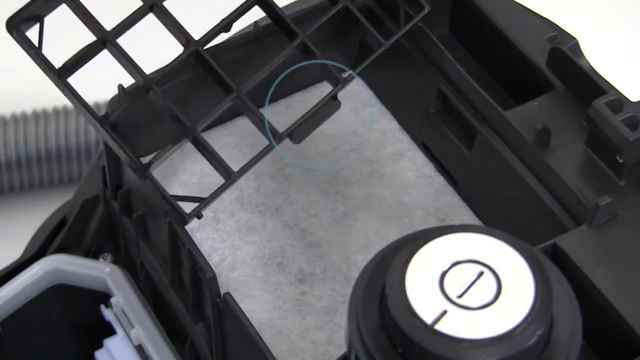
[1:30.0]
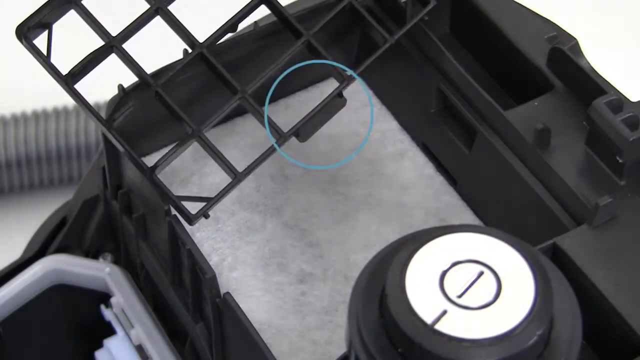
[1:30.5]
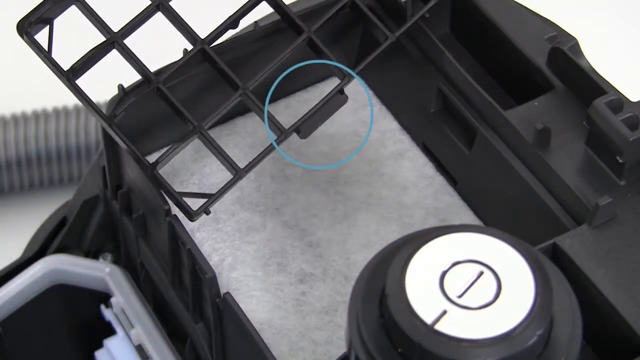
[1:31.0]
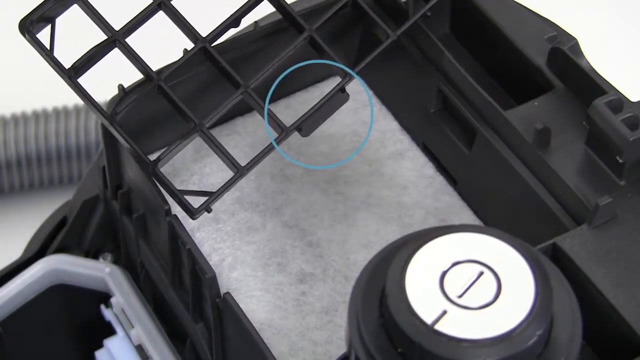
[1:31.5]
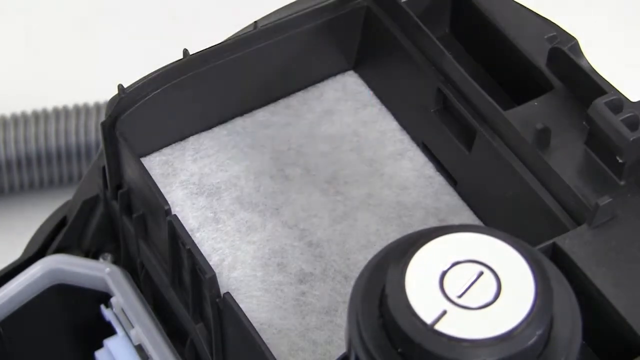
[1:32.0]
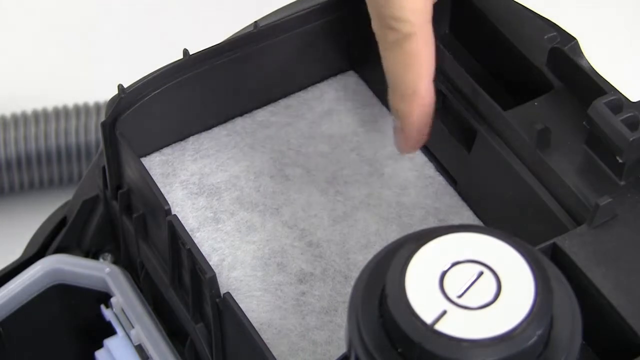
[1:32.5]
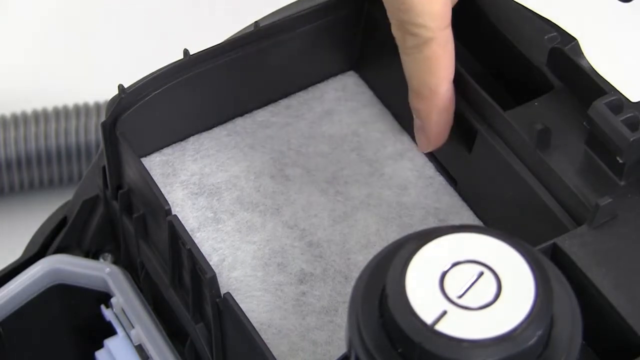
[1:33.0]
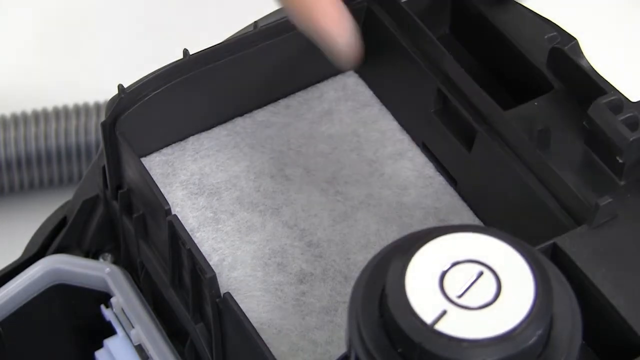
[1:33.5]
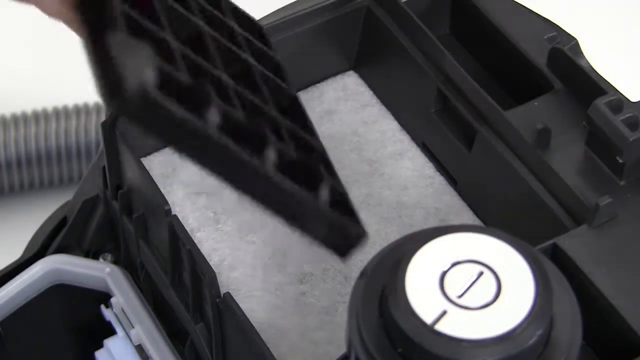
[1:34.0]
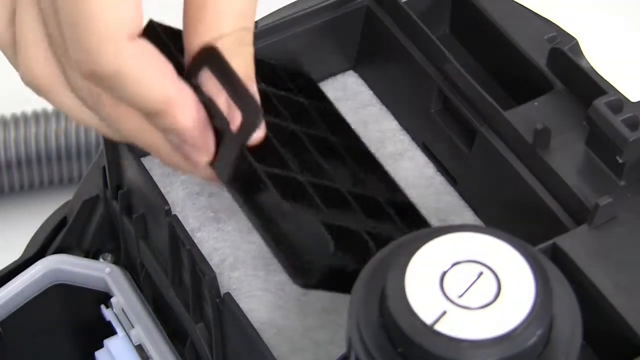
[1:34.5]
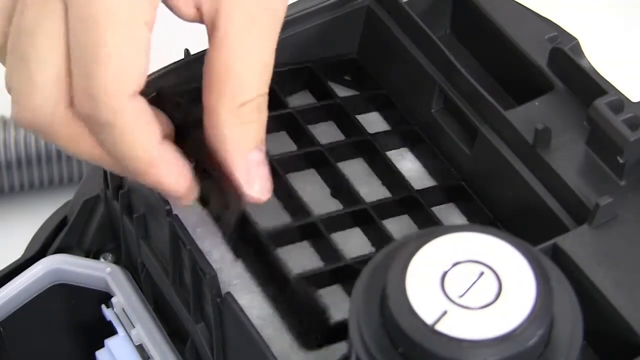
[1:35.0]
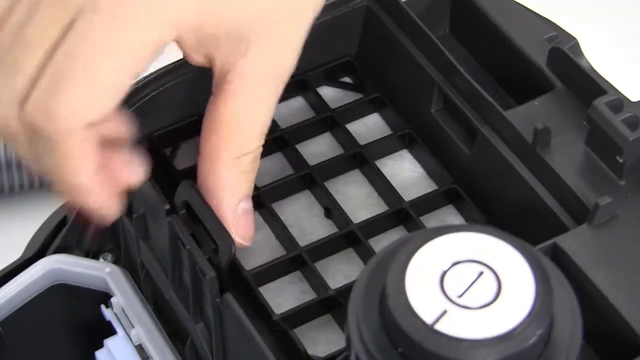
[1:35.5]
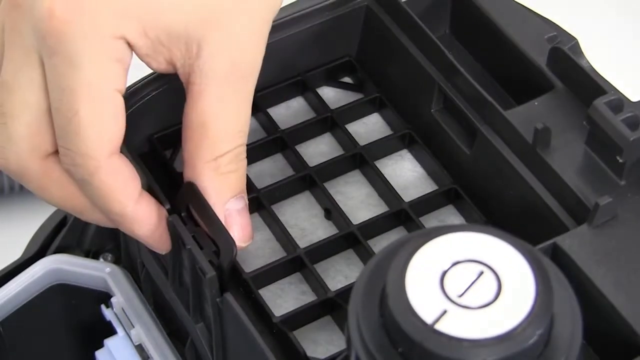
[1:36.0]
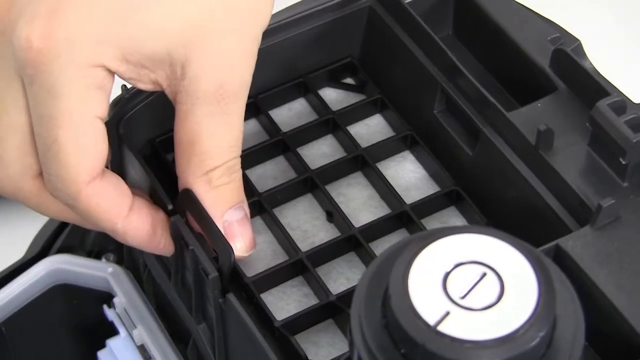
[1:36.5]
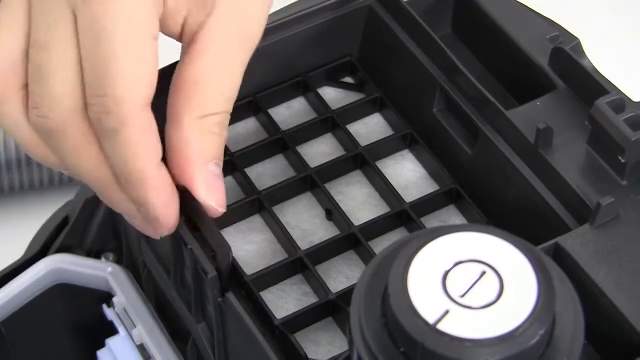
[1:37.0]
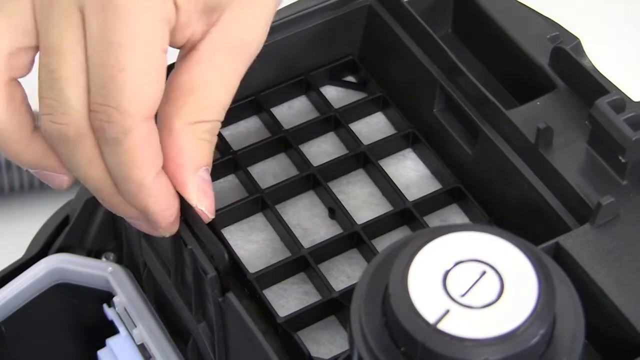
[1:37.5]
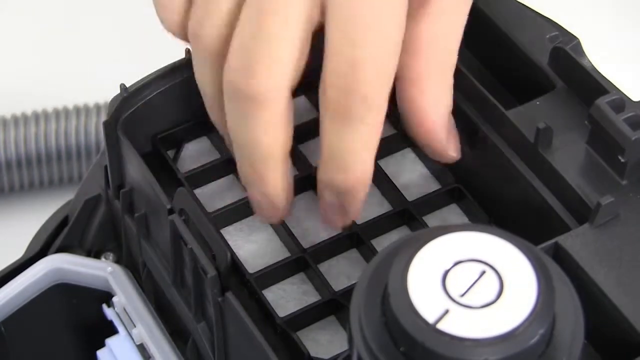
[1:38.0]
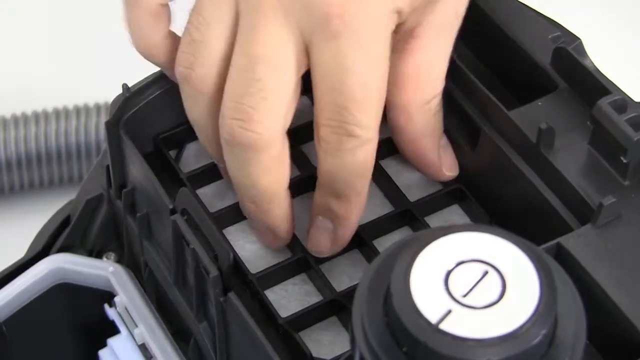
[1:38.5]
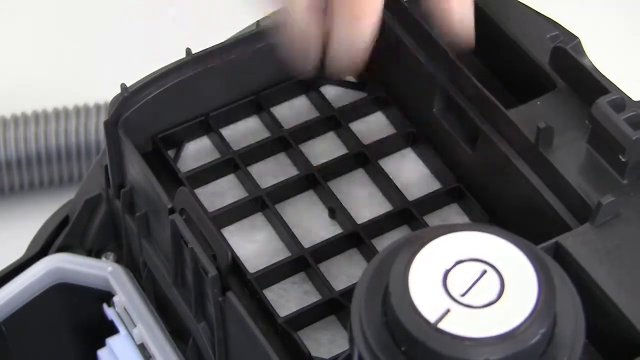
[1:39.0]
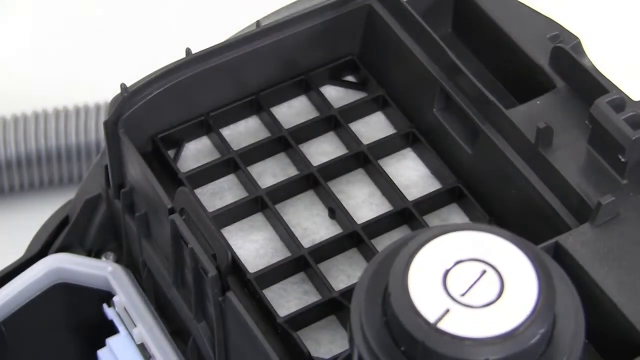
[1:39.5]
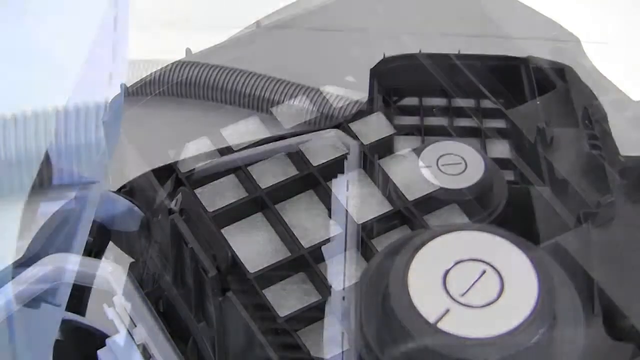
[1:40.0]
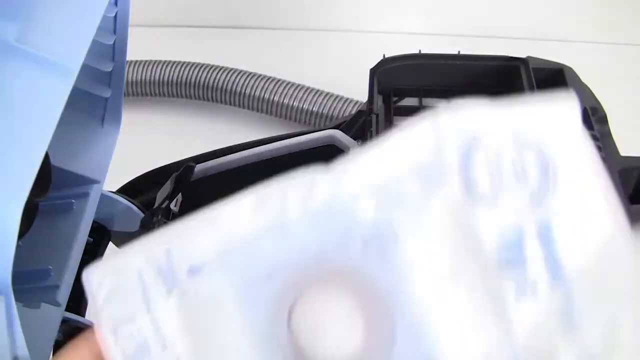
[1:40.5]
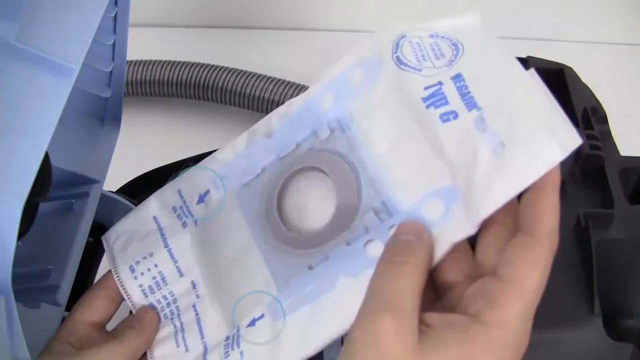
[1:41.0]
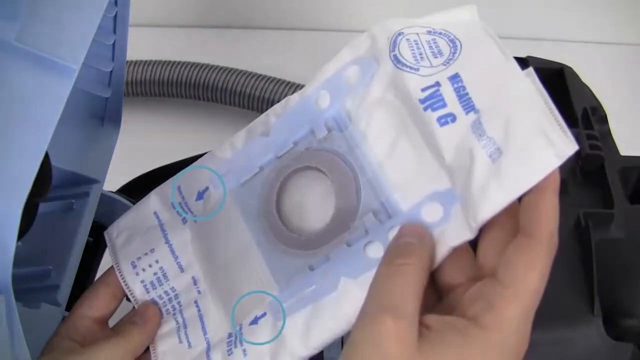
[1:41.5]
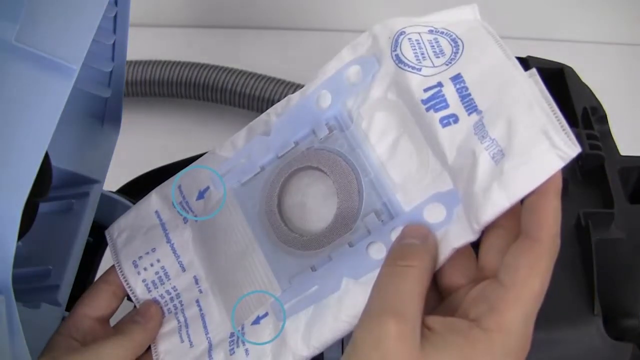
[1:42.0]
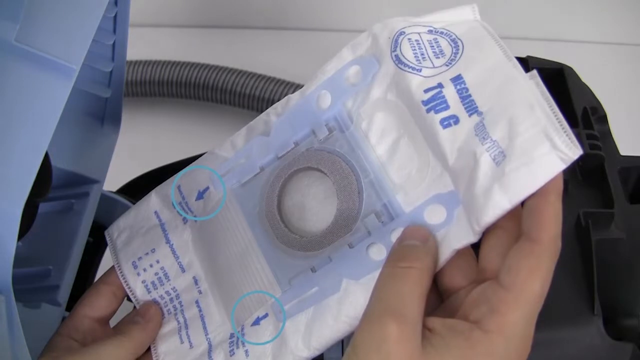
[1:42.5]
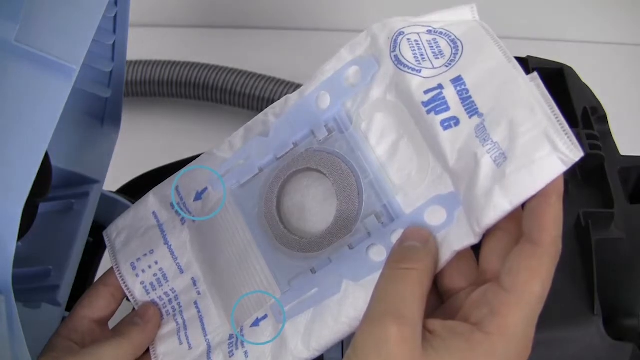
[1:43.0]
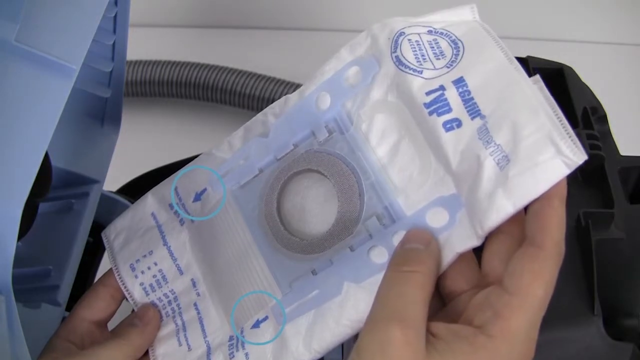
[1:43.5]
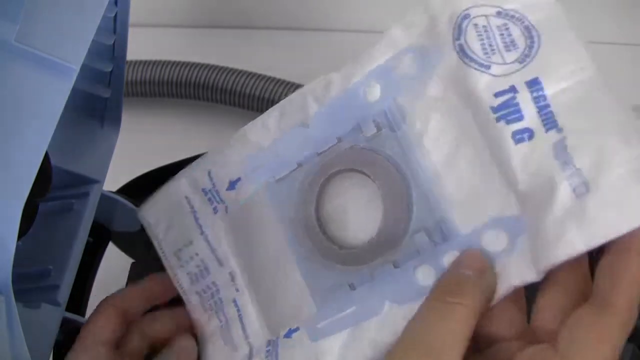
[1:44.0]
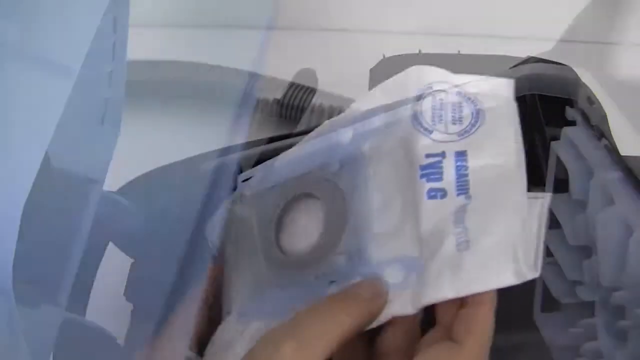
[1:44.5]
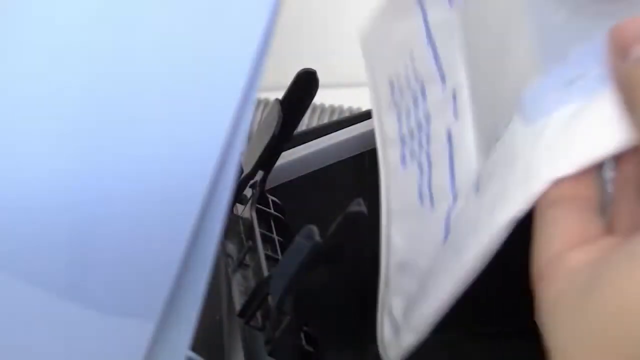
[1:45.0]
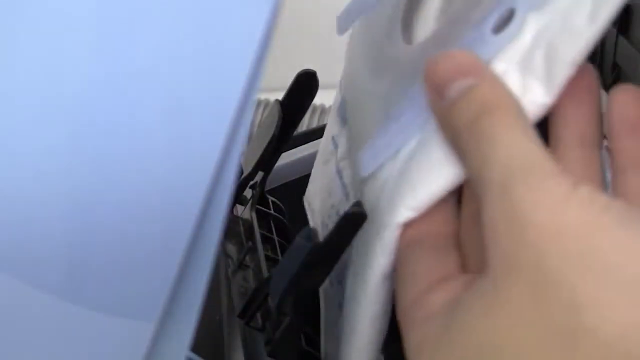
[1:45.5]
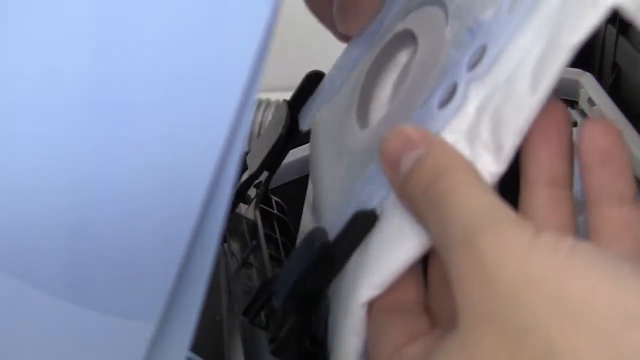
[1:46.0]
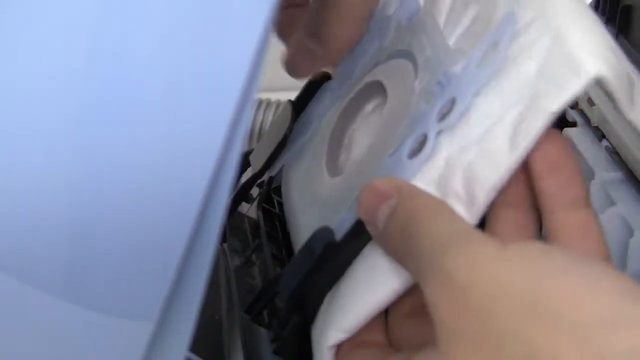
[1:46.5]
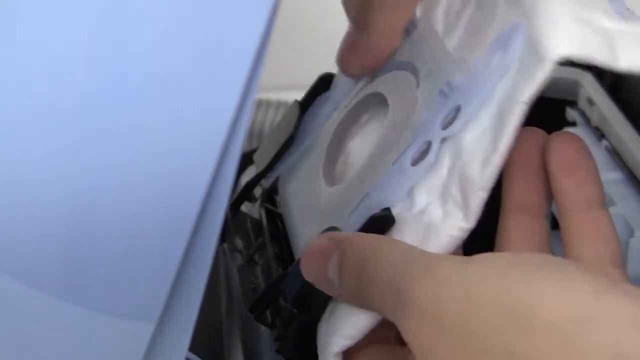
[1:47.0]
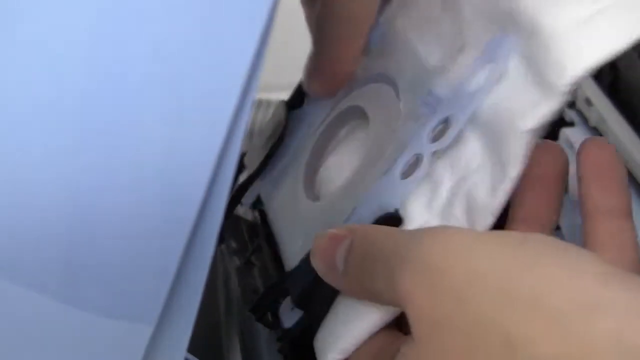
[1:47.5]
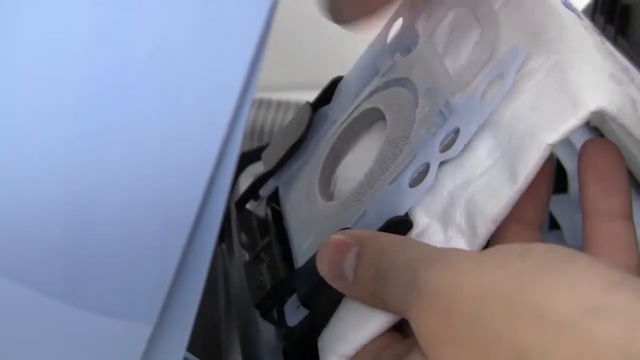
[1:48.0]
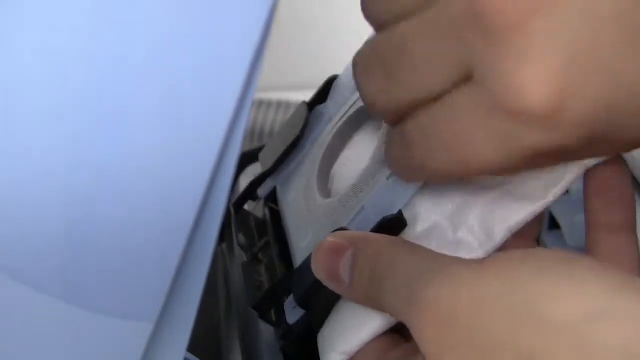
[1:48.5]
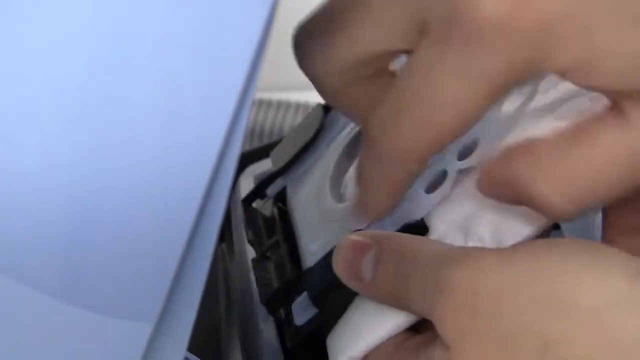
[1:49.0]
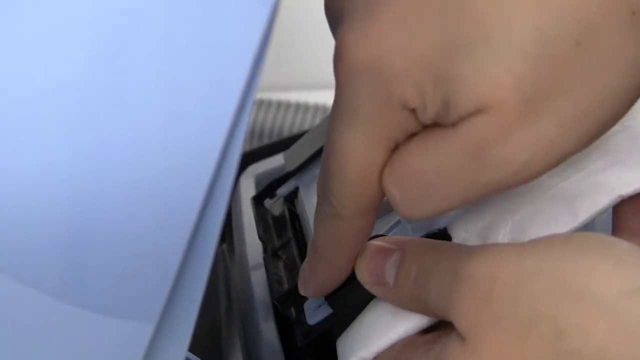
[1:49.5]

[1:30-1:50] The black four by four grid is placed into the open vacuum, whose internal parts are visible, with the filter paper beneath it. A hand points at the filter paper, directing toward the position where the grid is being placed. The grid is snapped along the side of the inner portion of the vacuum, and the hand makes sure it is fully secured and in the correct position. A transition leads to the hand holding what looks to be some sort of vacuum bag bearing the words "TYPG". Light blue circles are positioned toward where the arrows are on the bag, and there are arrows facing downwards in opposite directions, apparently indicating how the bag is placed within the vacuum. The hand then slides the bag into a black slot inside the vacuum.